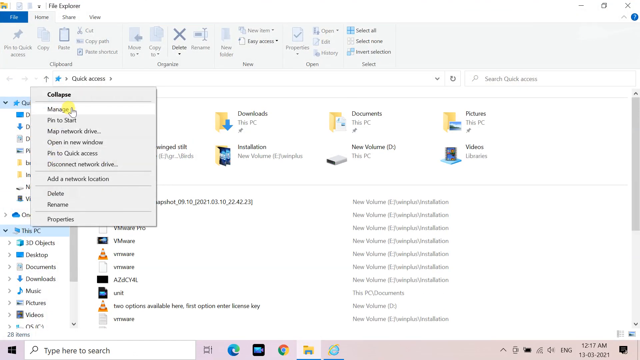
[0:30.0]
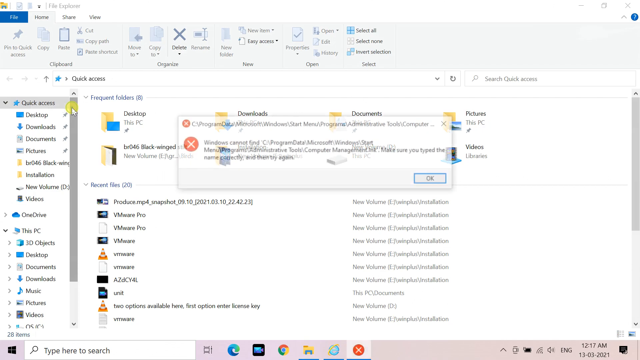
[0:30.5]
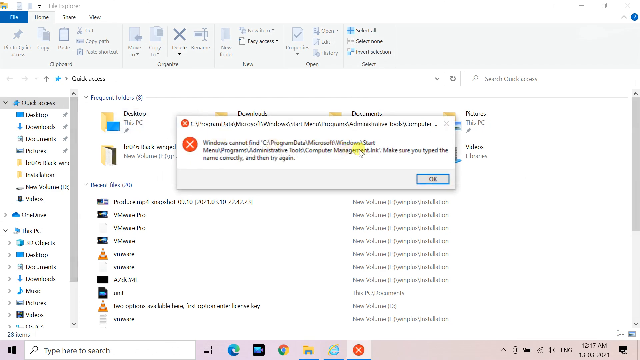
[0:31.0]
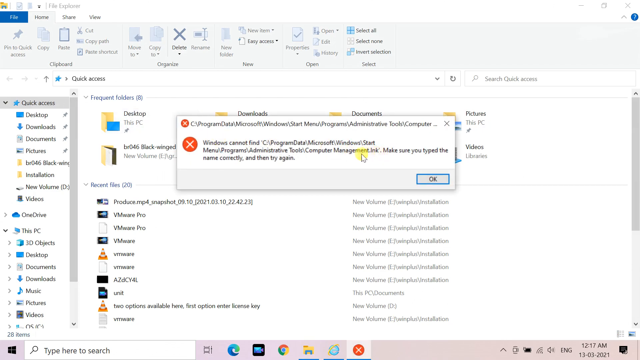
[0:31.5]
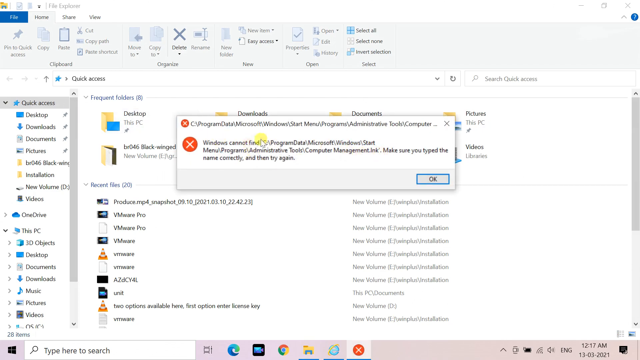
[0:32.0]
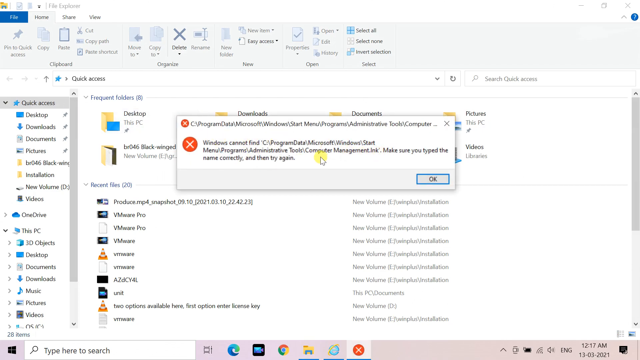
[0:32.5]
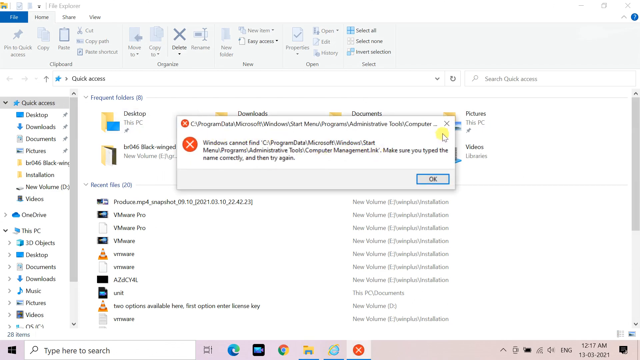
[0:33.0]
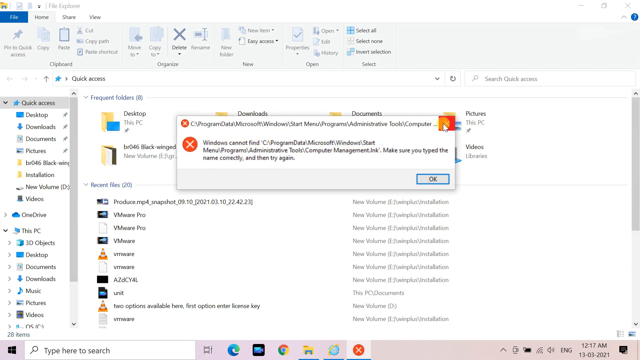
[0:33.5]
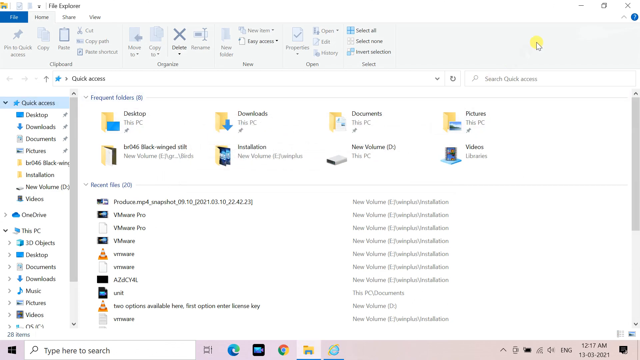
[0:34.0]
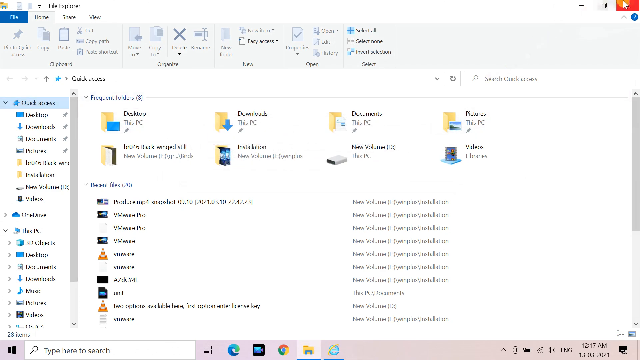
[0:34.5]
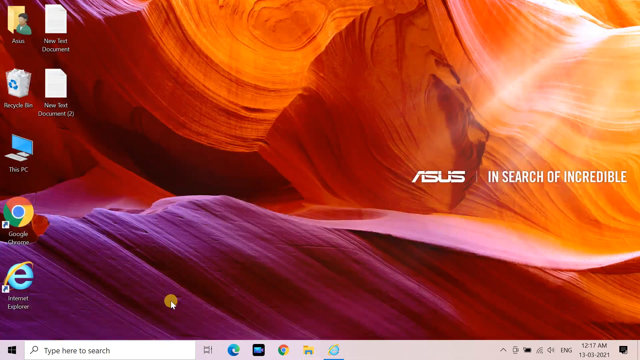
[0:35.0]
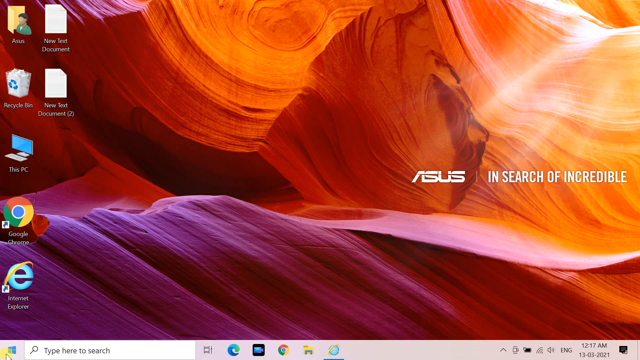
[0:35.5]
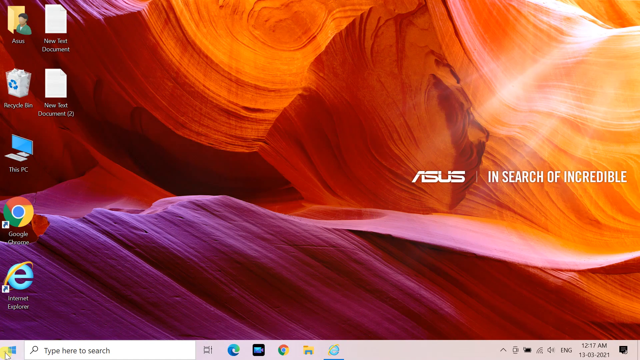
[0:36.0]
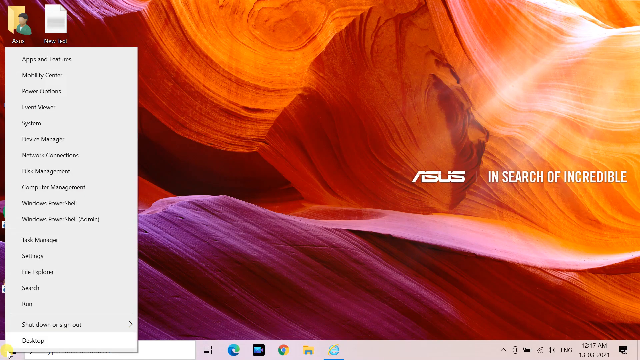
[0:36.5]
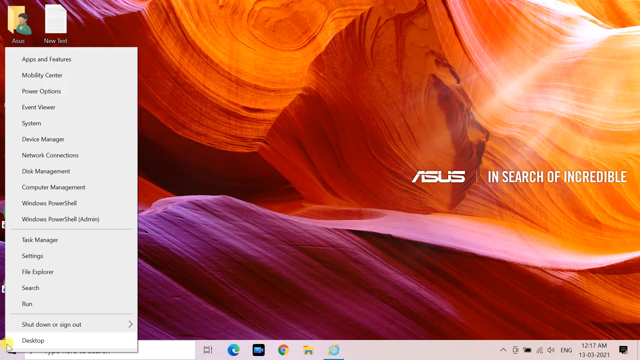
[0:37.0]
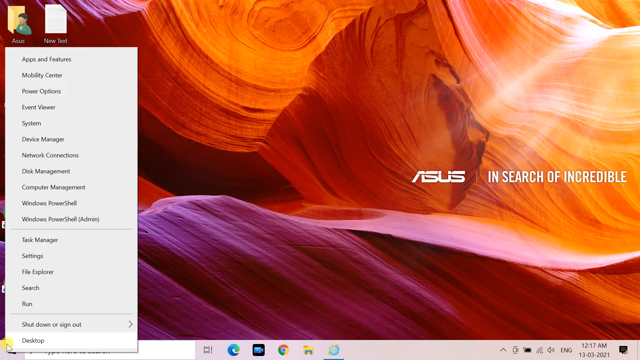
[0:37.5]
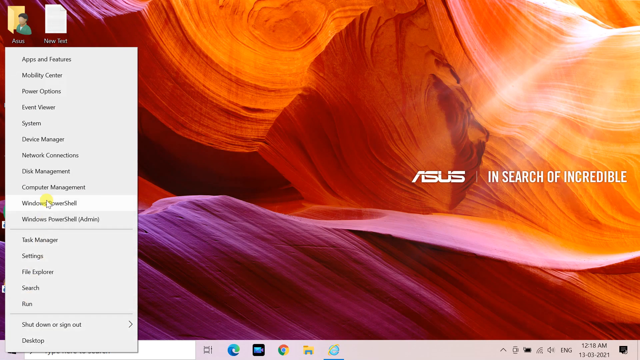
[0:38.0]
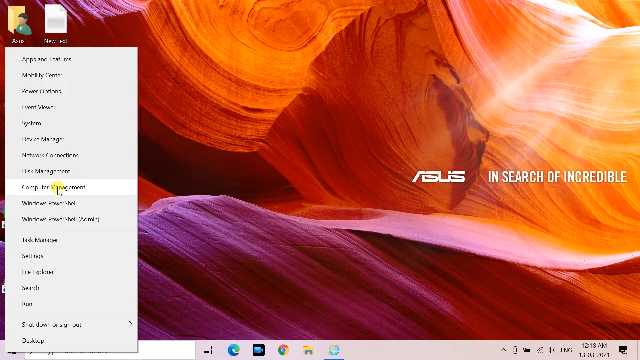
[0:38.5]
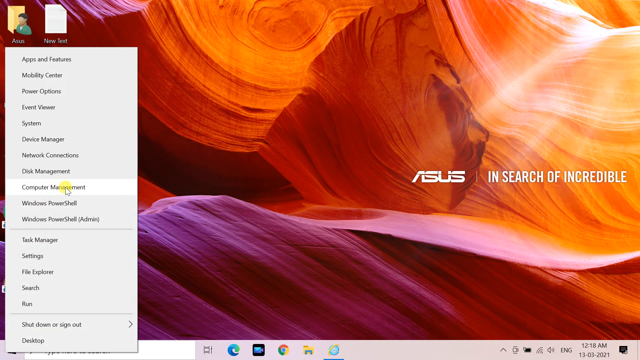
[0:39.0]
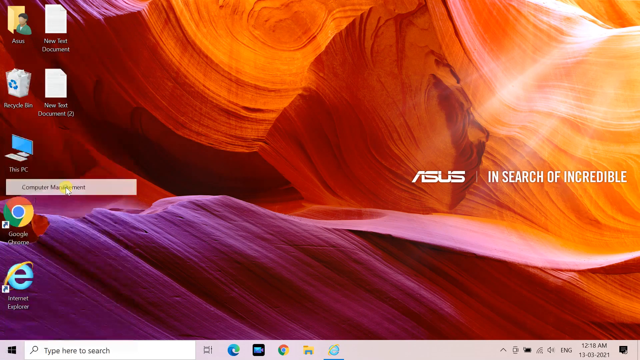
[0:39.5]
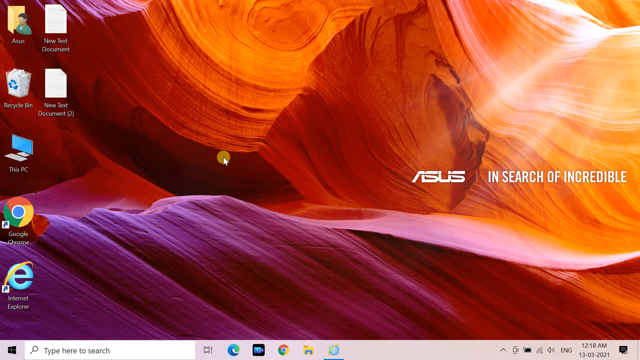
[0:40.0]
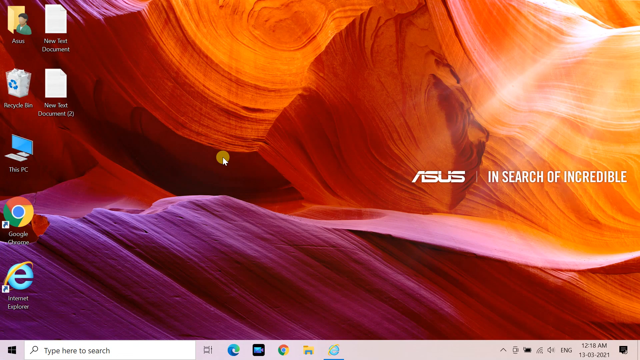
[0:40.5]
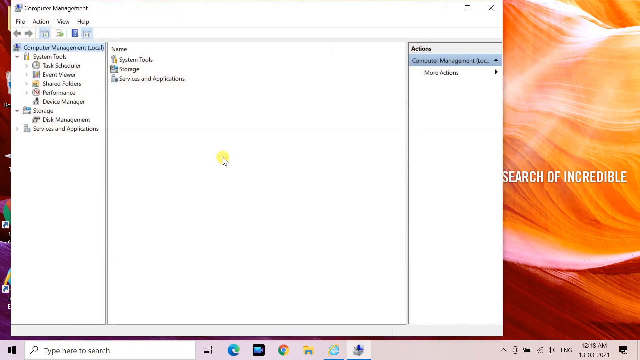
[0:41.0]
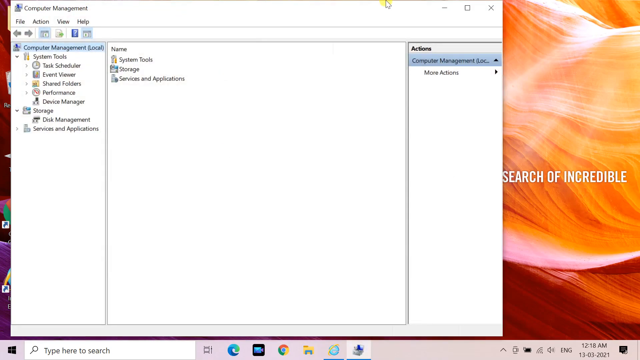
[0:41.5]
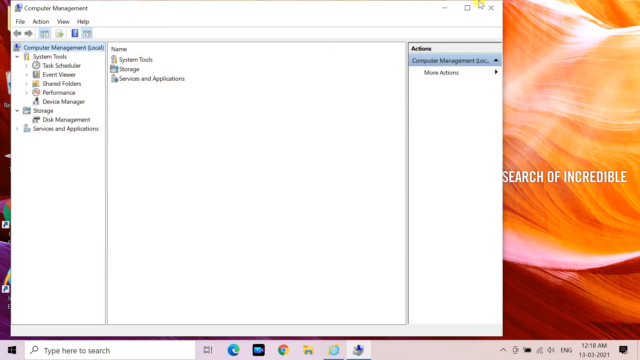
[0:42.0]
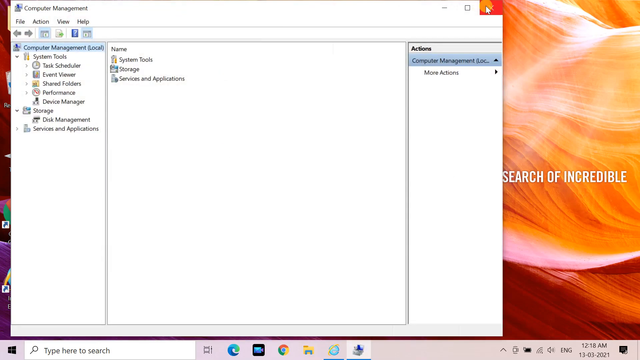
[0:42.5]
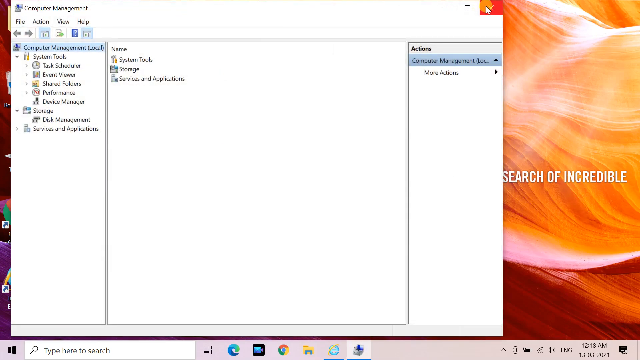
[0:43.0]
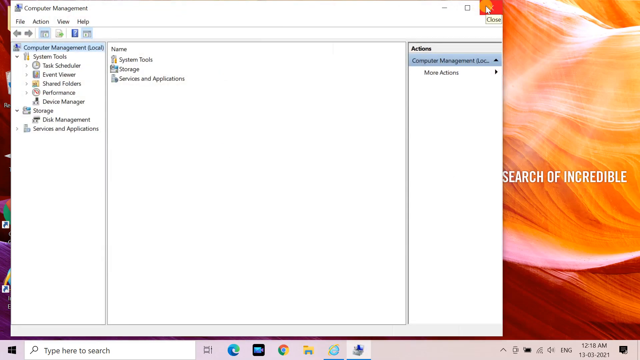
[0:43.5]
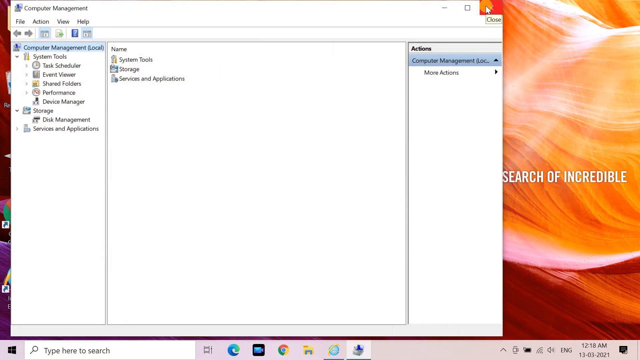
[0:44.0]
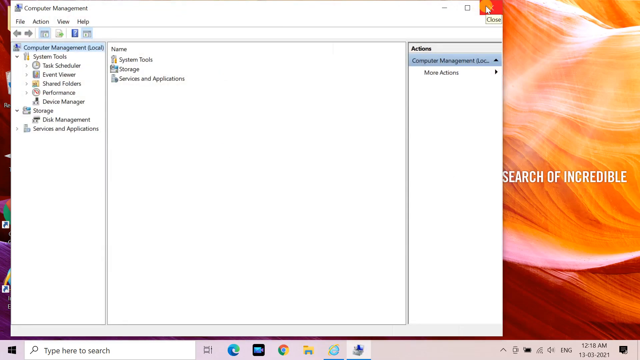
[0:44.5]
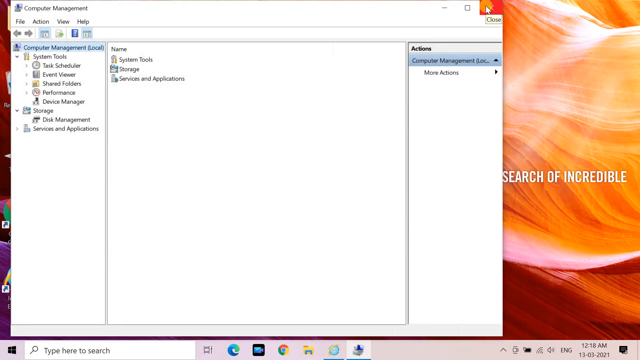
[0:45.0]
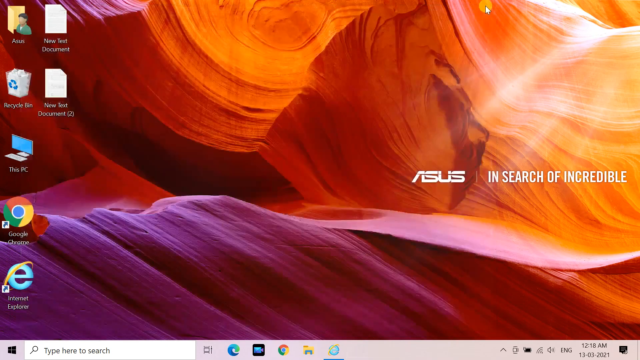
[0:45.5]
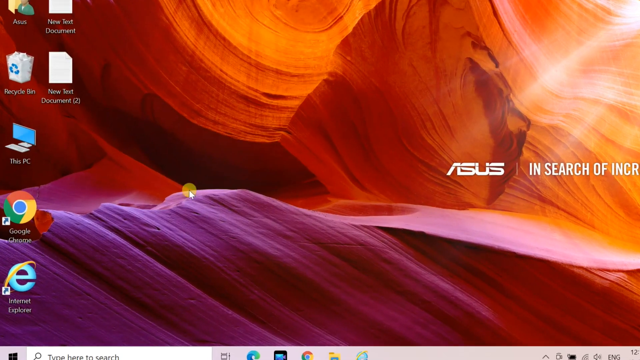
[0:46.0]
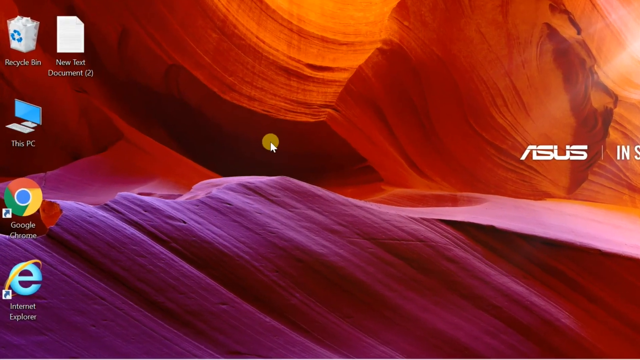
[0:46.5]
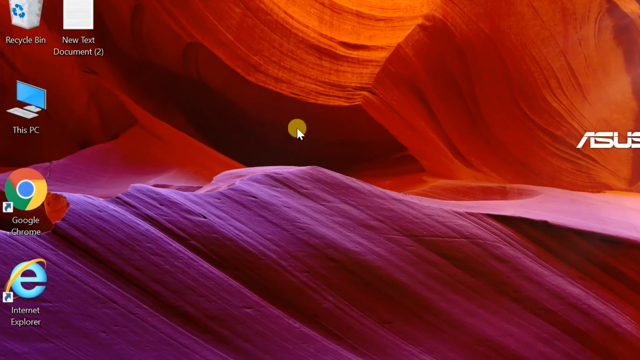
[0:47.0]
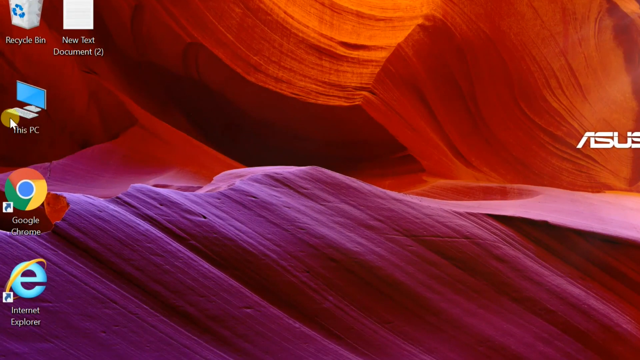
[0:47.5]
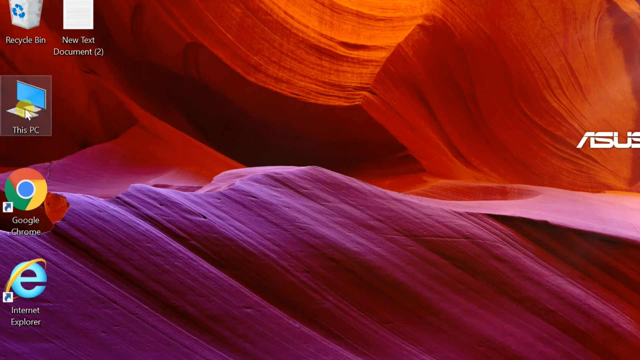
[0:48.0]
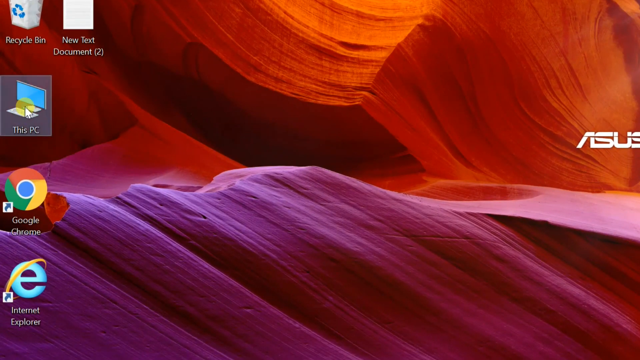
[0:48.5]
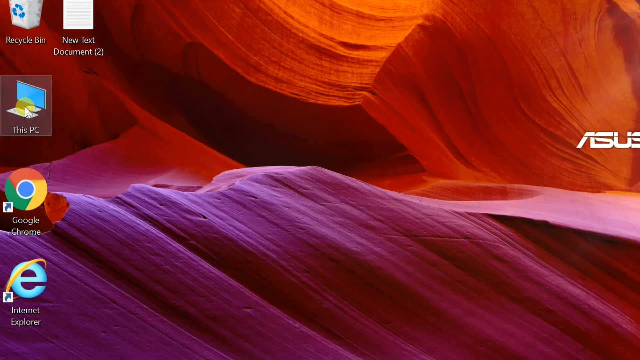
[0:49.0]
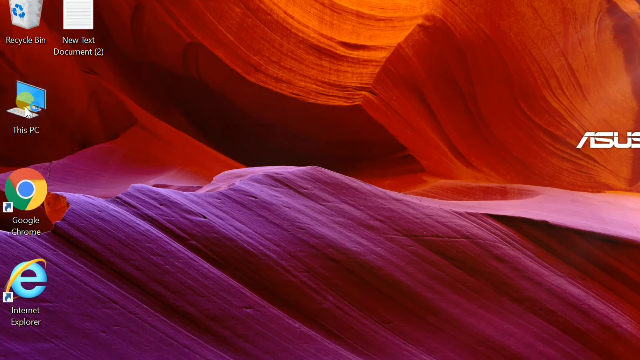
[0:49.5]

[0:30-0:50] An error window with a red X pops up saying the user is unable to open the file; the file seems to be "this PC." The video appears to be a screen mirroring or screen recording. The user exits the error window and exits a folder containing many different documents. They then open the file window and click on computer management, look at the options there, hover over the X, and close it. The mouse hovers over this PC, circles around it with the orange dot, and clicks on it. The folder this PC opens, showing seven folders, including three objects, desktop, documents, music, pictures, and videos.